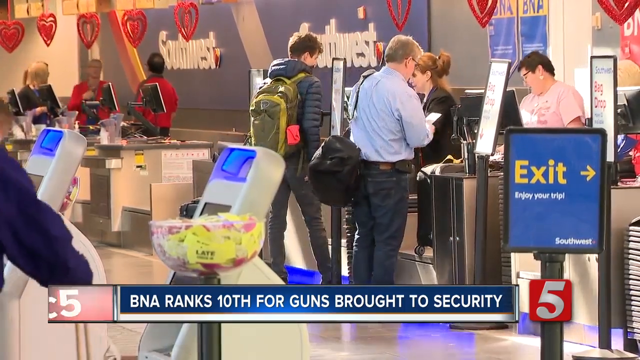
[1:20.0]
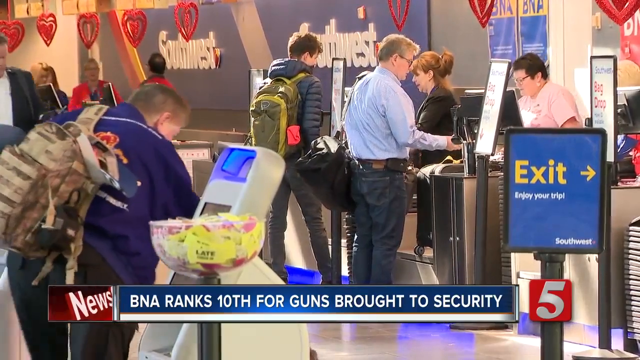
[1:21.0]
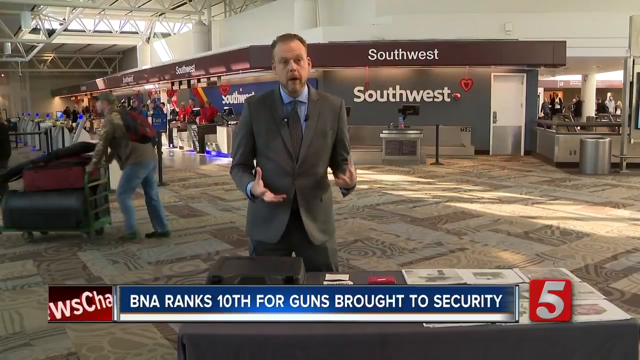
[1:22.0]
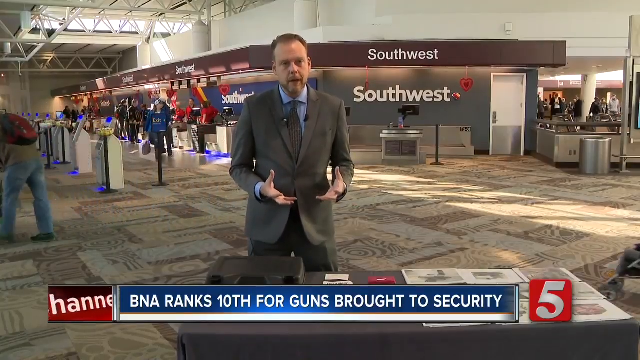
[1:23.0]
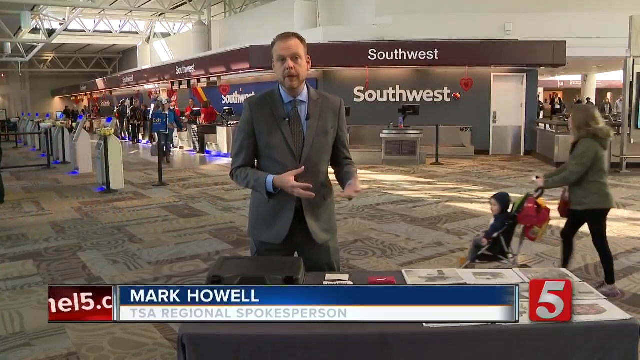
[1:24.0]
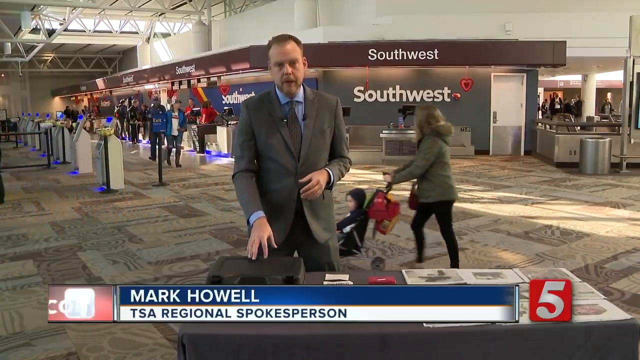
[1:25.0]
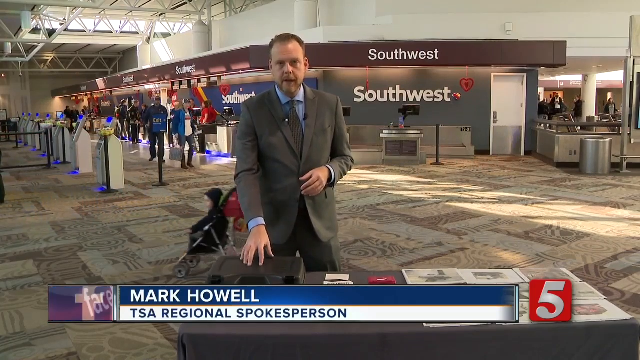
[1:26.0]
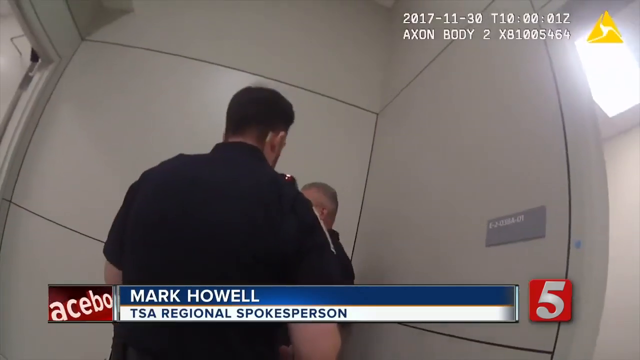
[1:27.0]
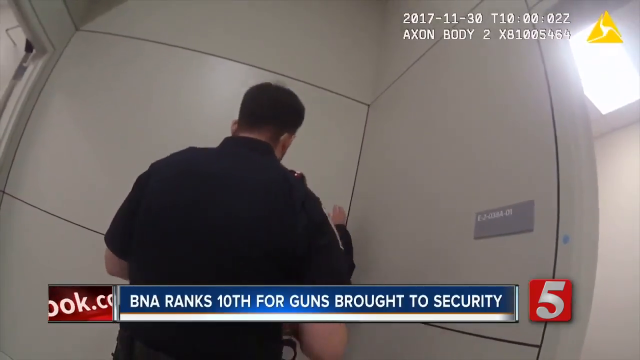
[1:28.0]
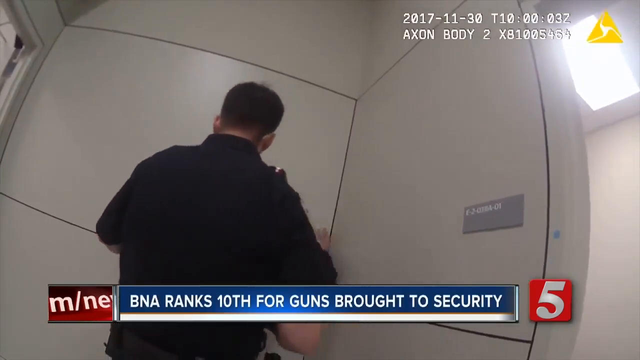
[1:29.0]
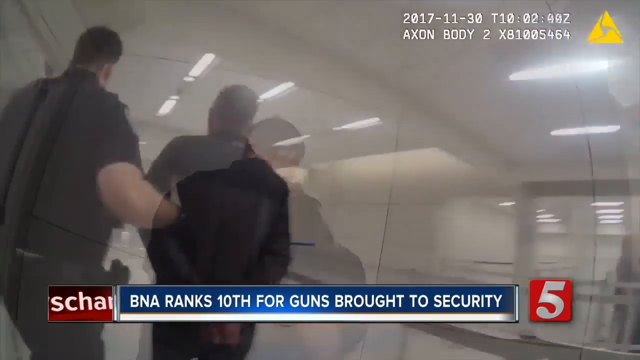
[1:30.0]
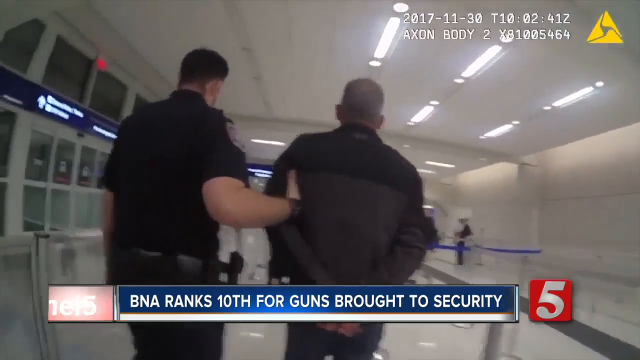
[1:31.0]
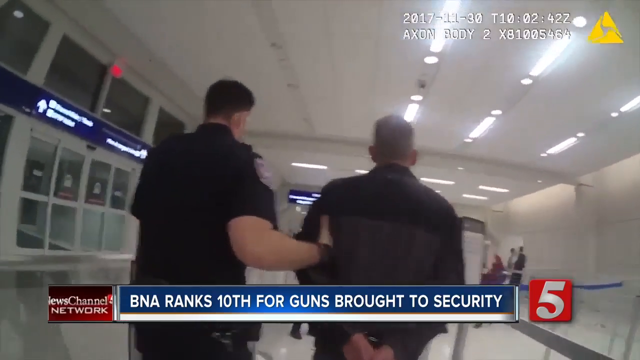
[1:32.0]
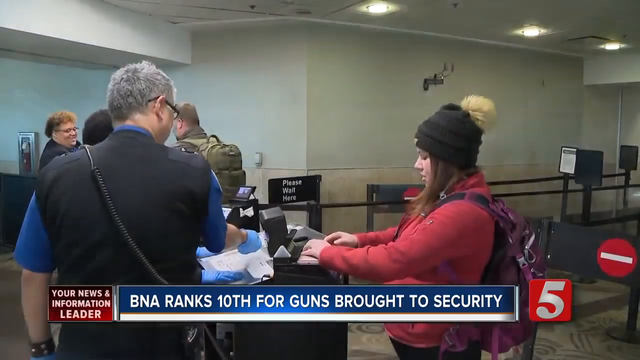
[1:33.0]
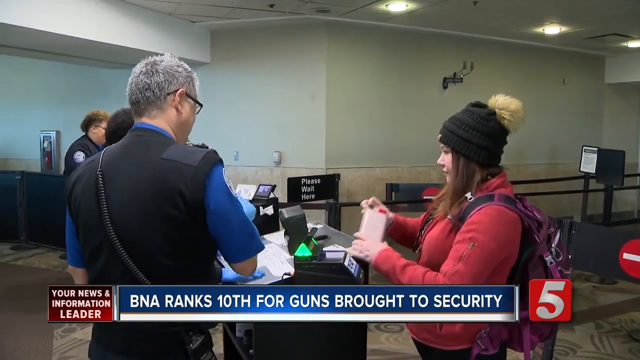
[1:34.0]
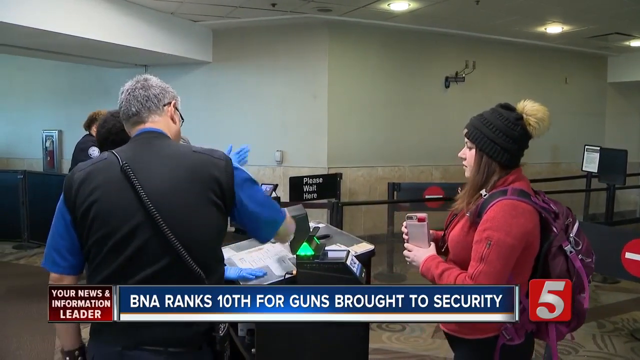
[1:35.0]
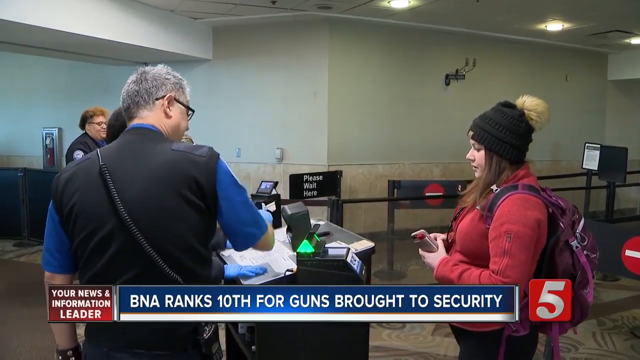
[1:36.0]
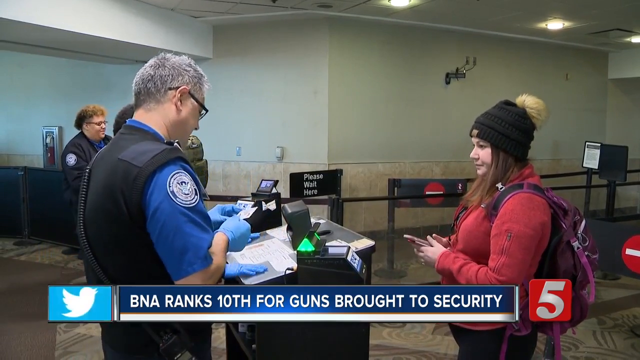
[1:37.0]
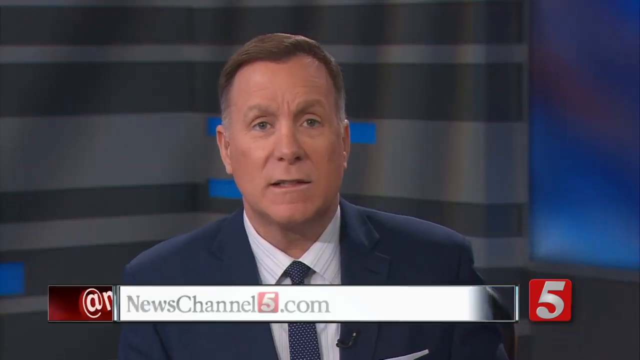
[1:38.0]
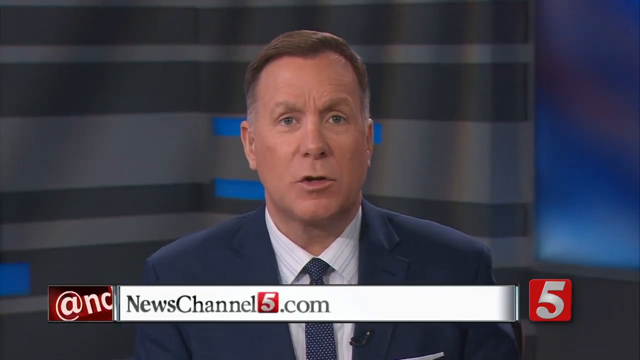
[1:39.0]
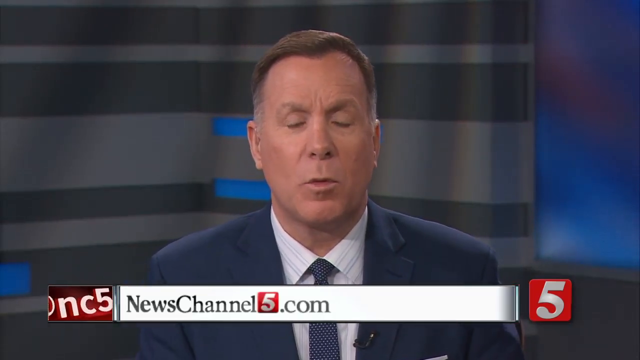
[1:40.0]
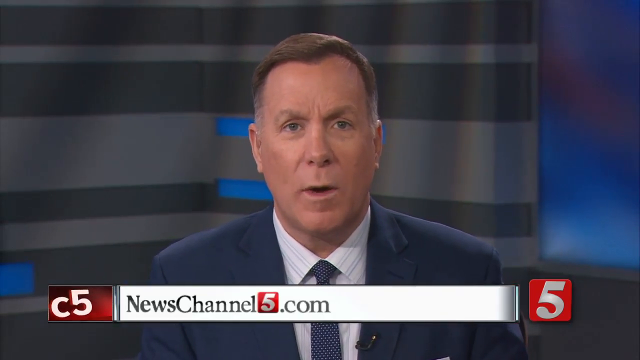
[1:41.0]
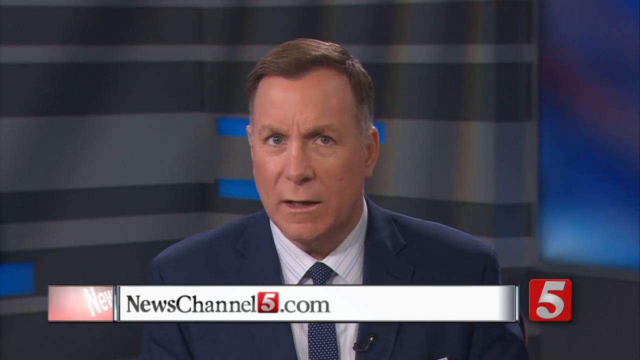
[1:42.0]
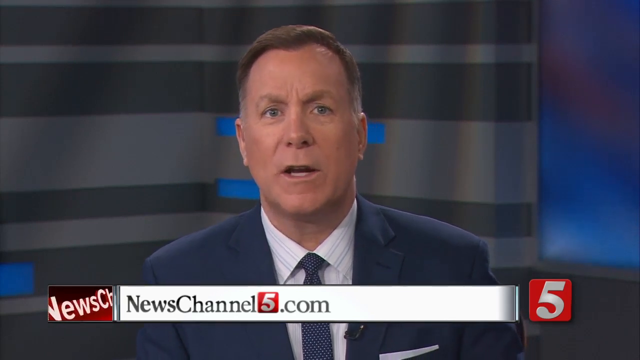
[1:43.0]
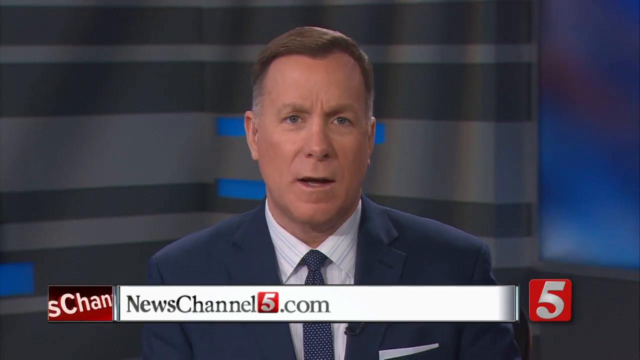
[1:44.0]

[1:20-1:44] Mark Howell, a TSA regional spokesperson, appears with Southwest in the background, in what seems to be an office, and he is carrying a suitcase. CCTV footage from November 30, 2017 shows a passenger found in possession of a gun being handcuffed and taken away, apparently into custody. A woman is also being searched. The video cuts back to News Channel 5.com, then again shows that BNA ranks 10th for guns brought to security, and returns to the News 5.com news anchor.